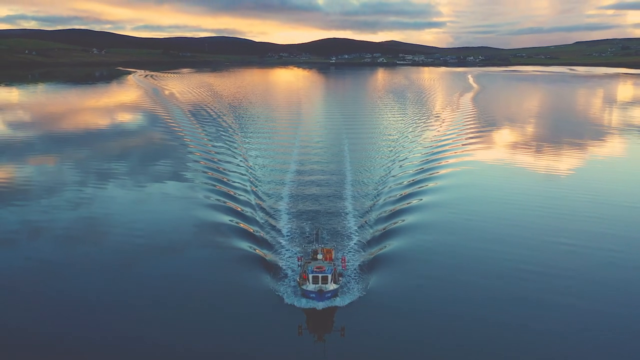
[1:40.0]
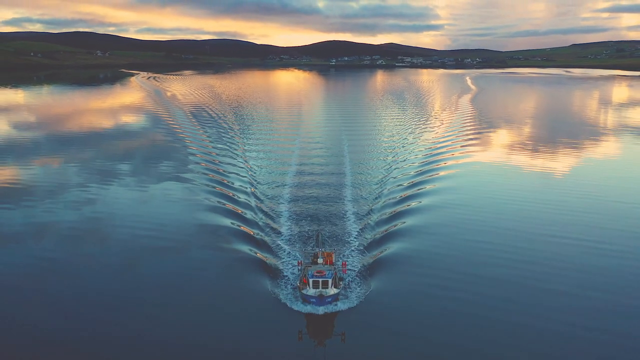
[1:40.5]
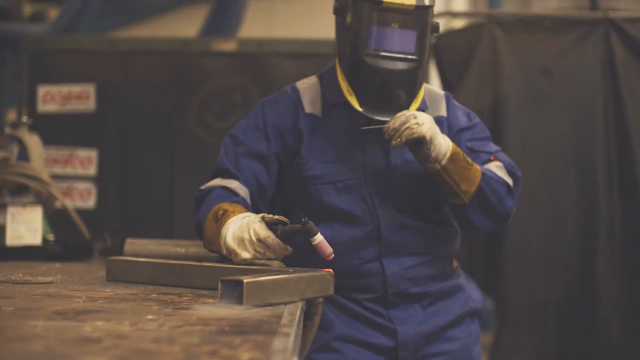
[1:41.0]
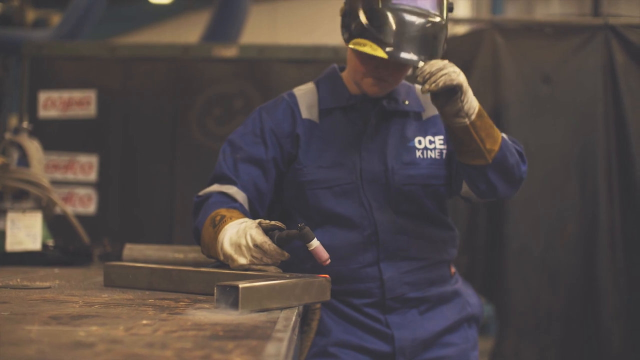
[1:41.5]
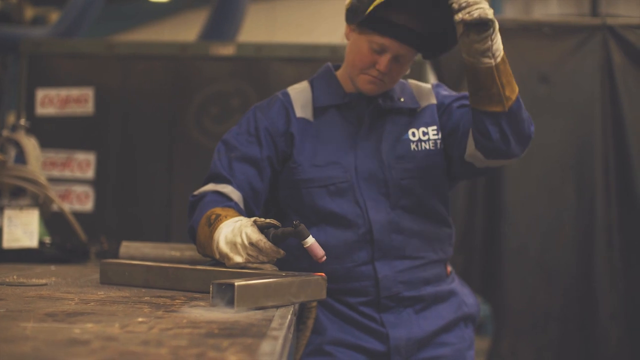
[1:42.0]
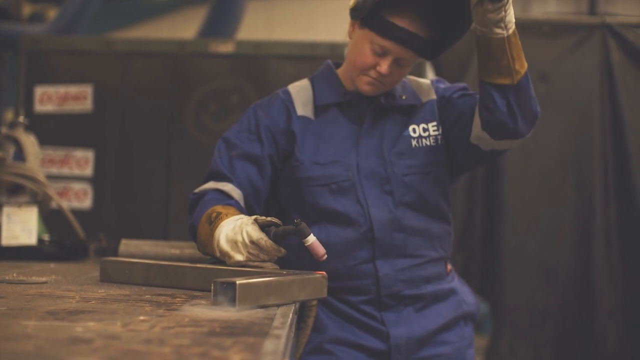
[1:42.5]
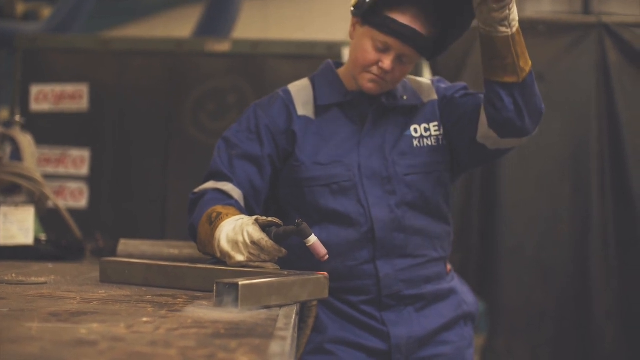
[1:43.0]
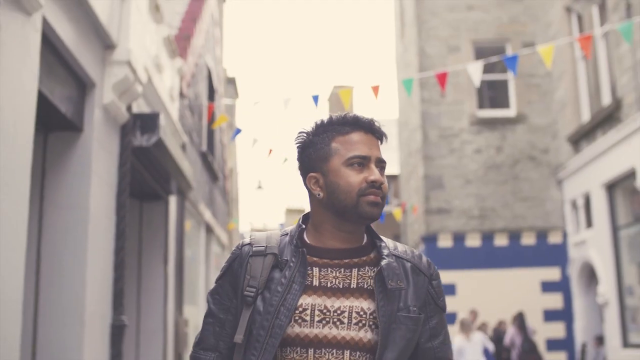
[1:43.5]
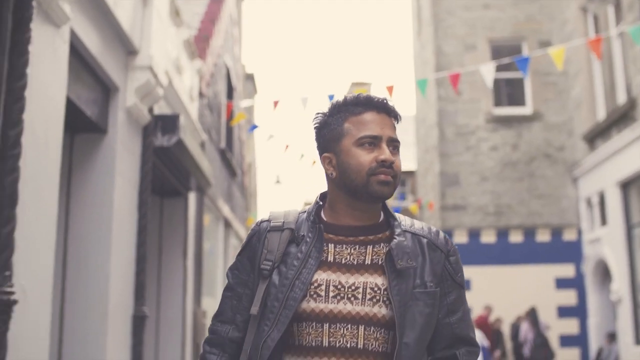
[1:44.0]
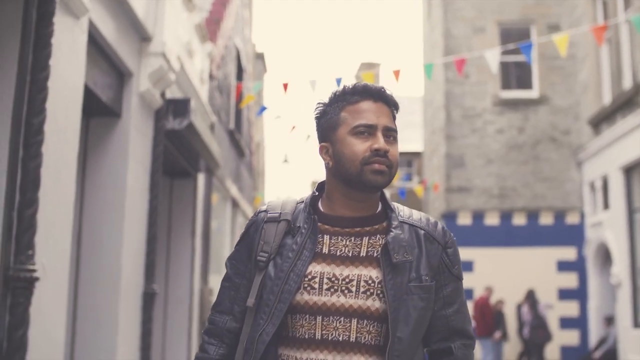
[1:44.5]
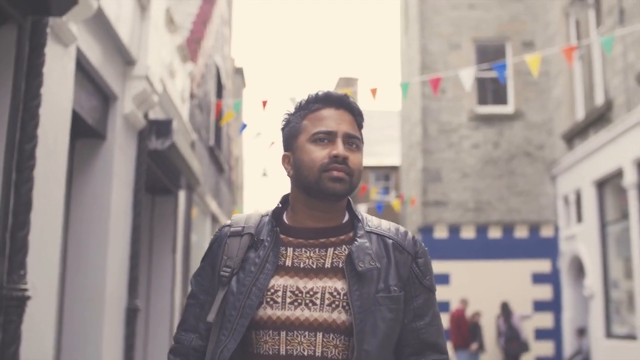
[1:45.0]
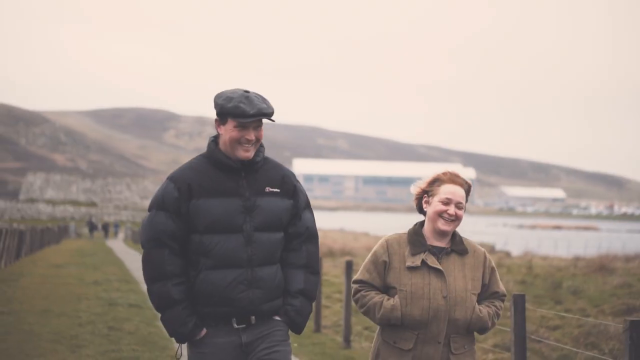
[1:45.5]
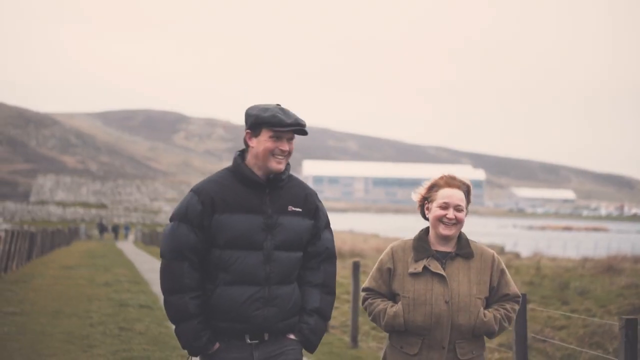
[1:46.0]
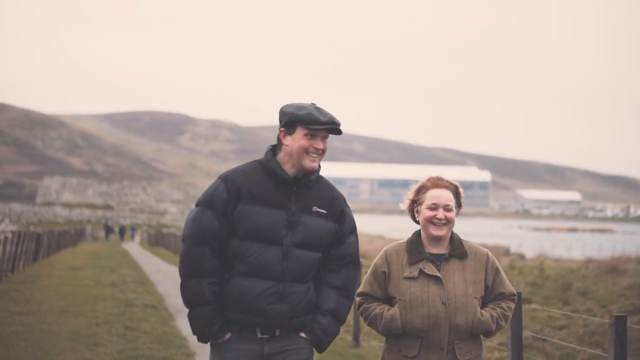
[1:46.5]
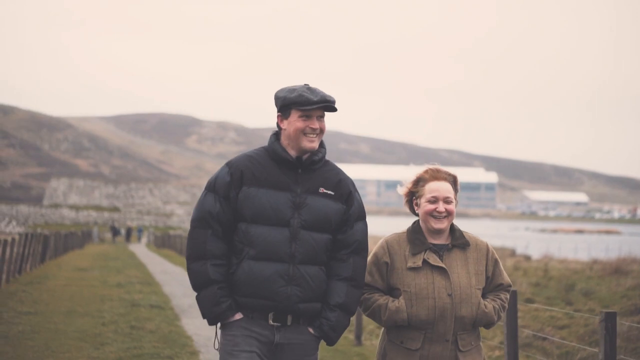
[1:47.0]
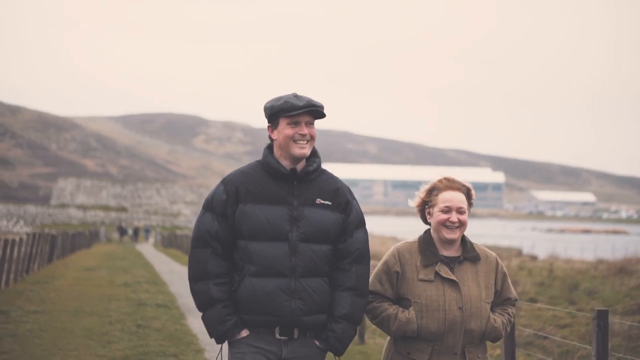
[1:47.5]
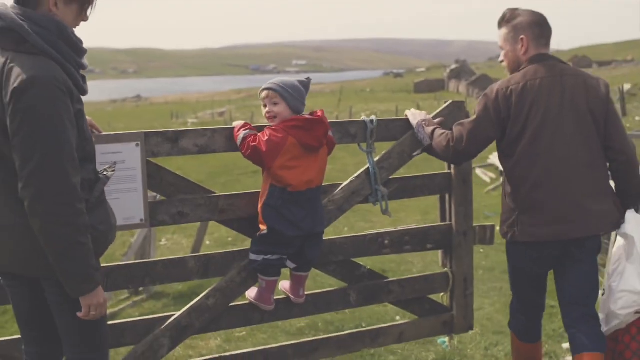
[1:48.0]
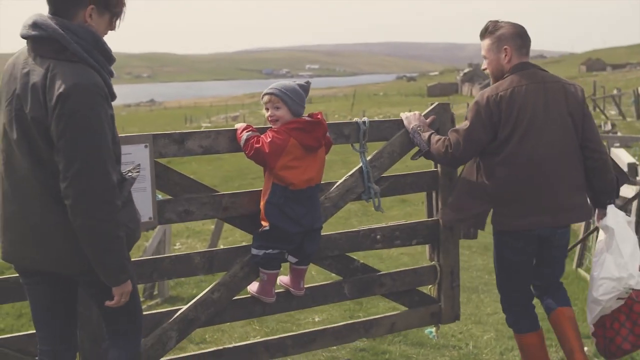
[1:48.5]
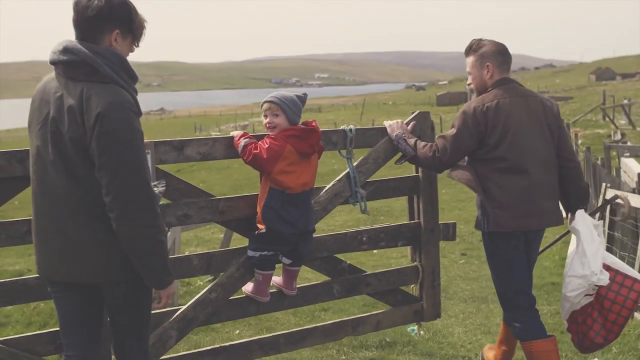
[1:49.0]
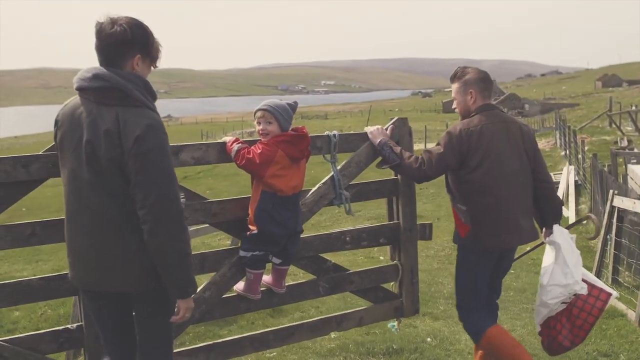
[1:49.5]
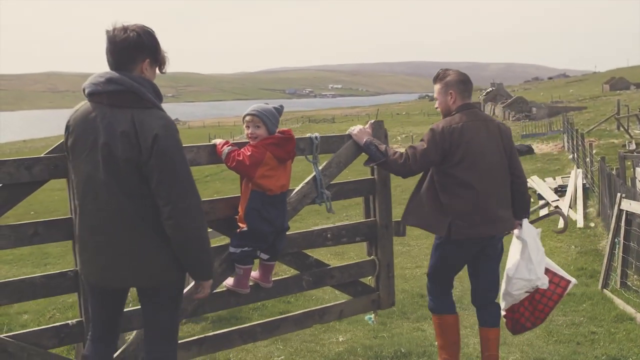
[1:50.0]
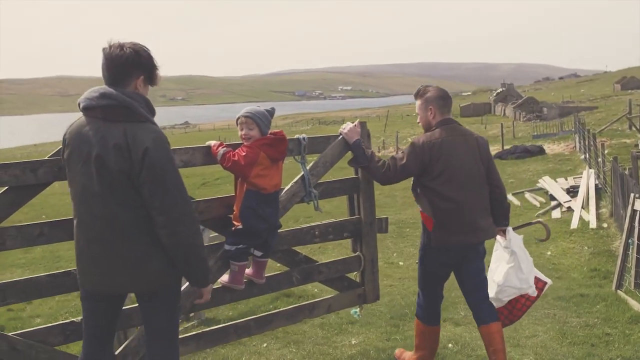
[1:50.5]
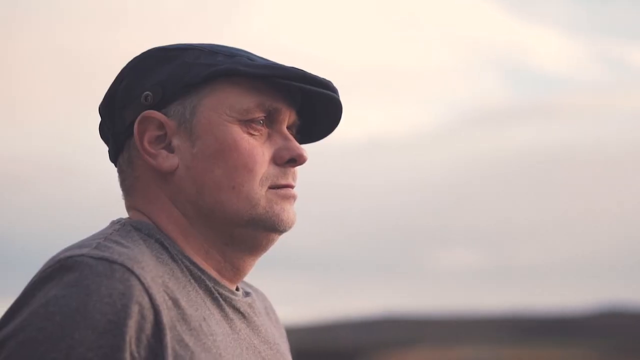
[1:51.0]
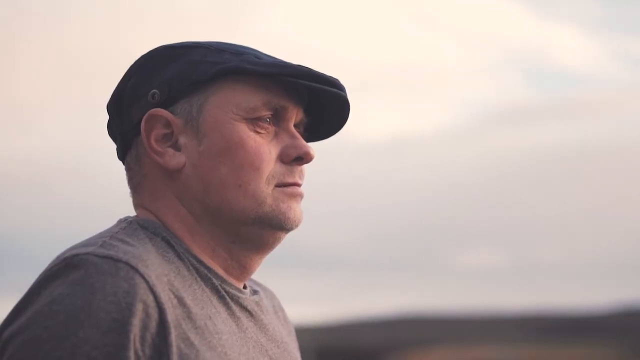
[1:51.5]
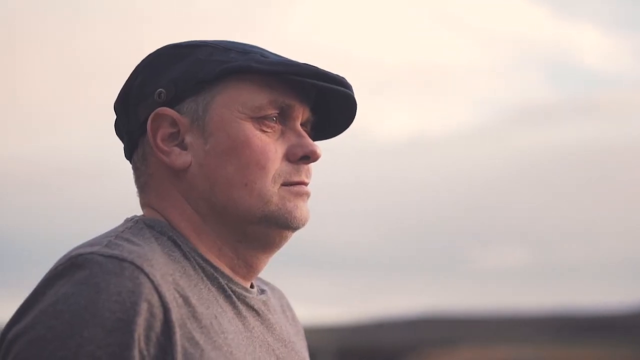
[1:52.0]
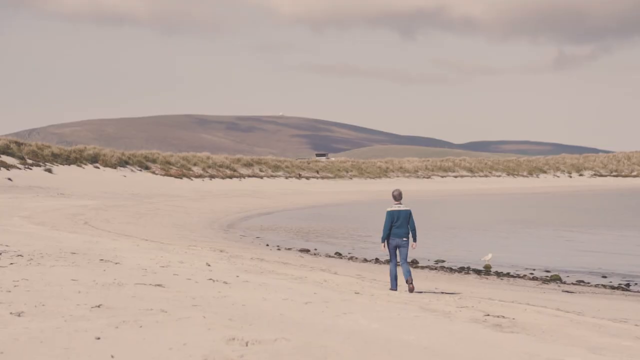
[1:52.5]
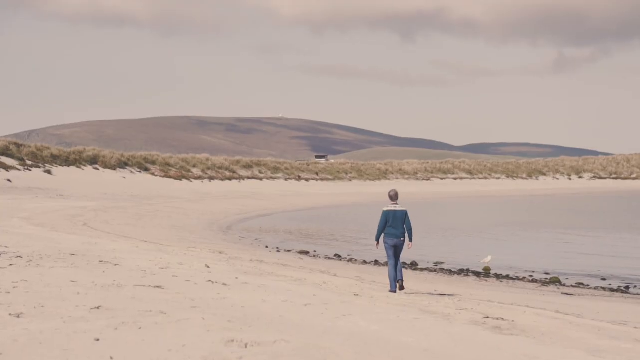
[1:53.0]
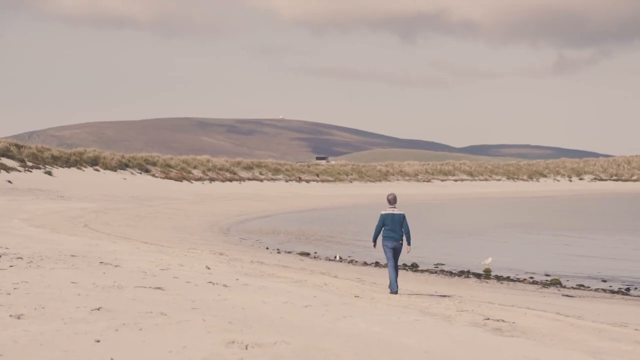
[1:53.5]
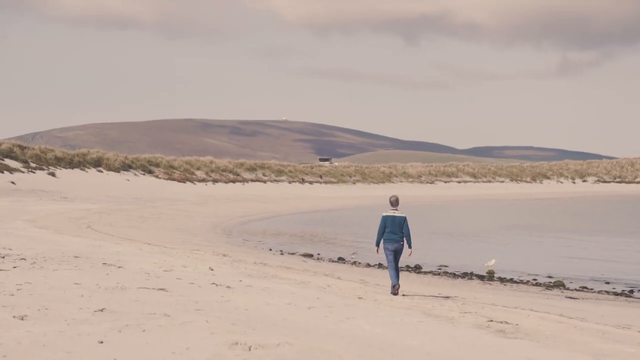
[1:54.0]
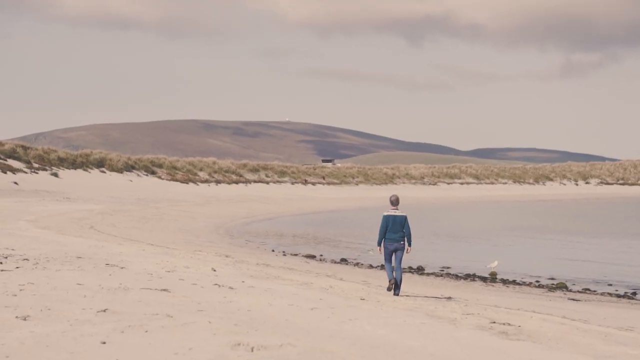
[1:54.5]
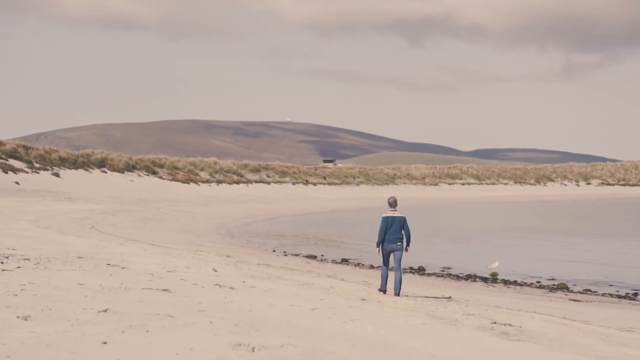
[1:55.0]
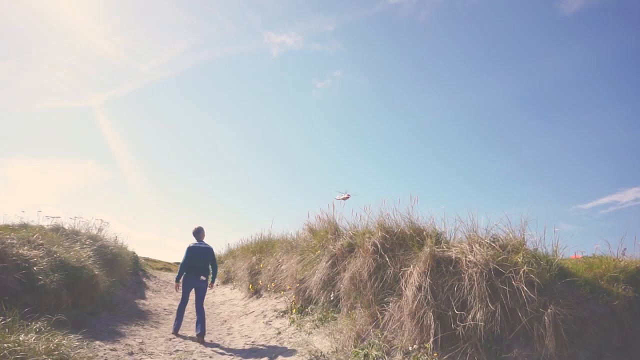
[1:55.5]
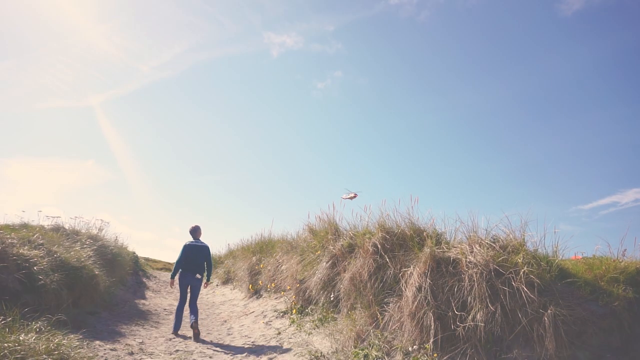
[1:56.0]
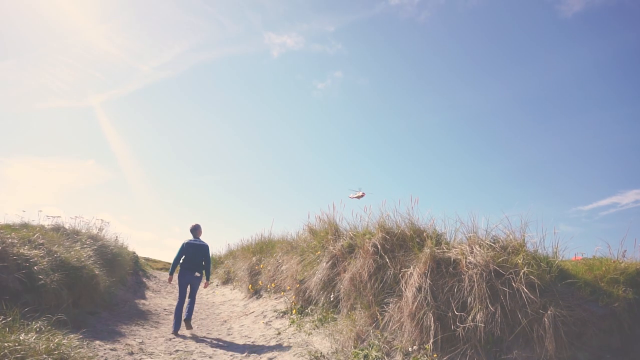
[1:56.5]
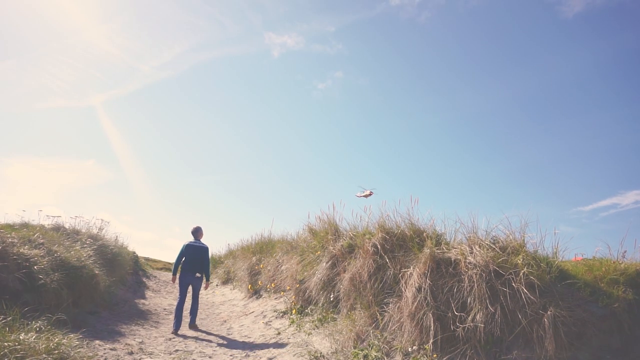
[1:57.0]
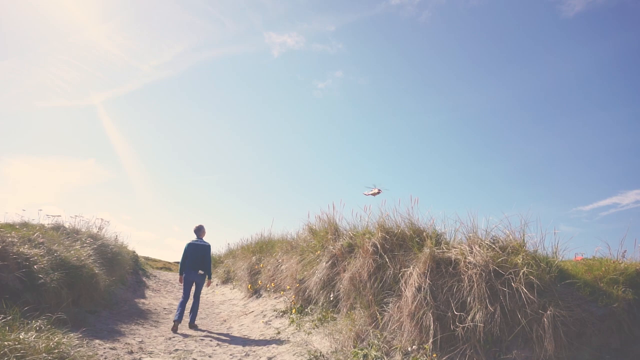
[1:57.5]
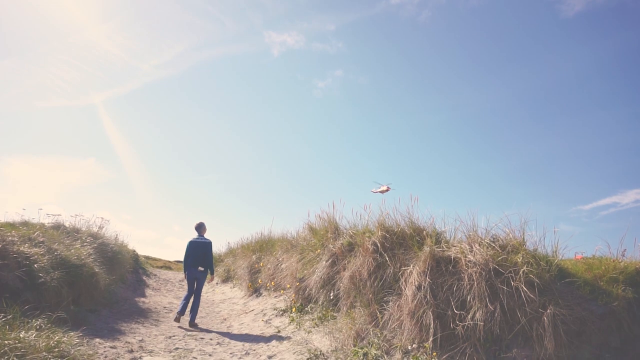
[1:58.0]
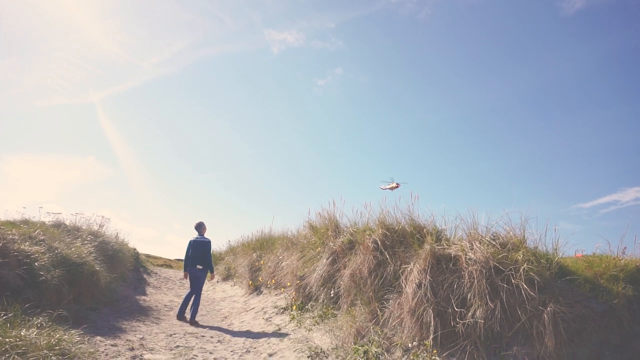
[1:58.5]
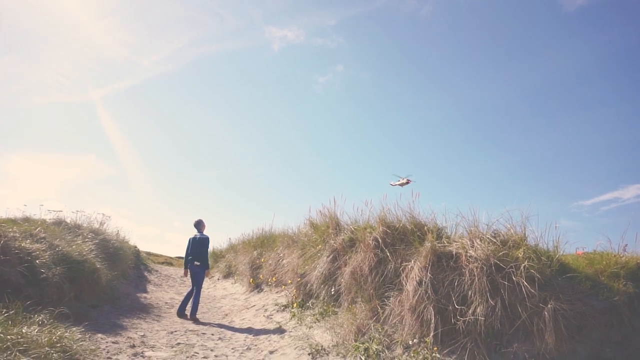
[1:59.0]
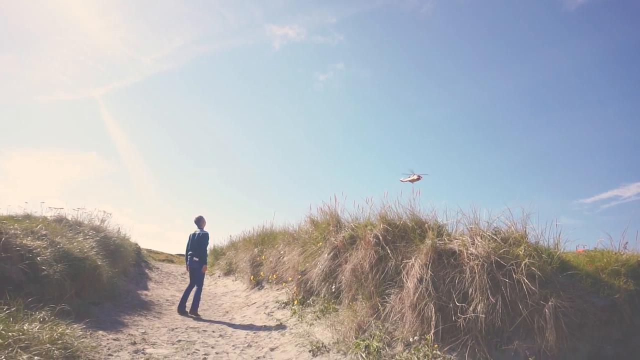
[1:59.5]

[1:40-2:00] A workman does welding work on a large steel object. He holds a welding tool and wears blue overalls, big white protective gloves and a metal protective mask, which he pulls above his face. The workshop in the background has various pipes and objects with logos on them, with the text in red. A man walks through what looks to be a village celebrating an event; he wears a leather jacket, a backpack and a brown and white jumper. In another rural setting, two people walk through a valley, smiling and laughing, in outdoor walking attire, with a flat cap. Next, a set of parents take their child for a walk across Shetland; the child swings on a gate as his dad pushes it open. The dad wears blue jeans, a brown jacket and boots. The child wears a red and orange jacket, blue trousers and pink Wellington boots. The mother wears a greenish coat with a hood and has mid-length hair. The rural landscape looks to be a farm. A close-up shows a middle-aged man in a flat cap and a grey t-shirt looking out at the landscape. The video then cuts to the older woman seen earlier walking across the sandy beach, and in the next scene she walks from the sandy beach up into the rural landscape and looks up toward a helicopter on the right of the screen.